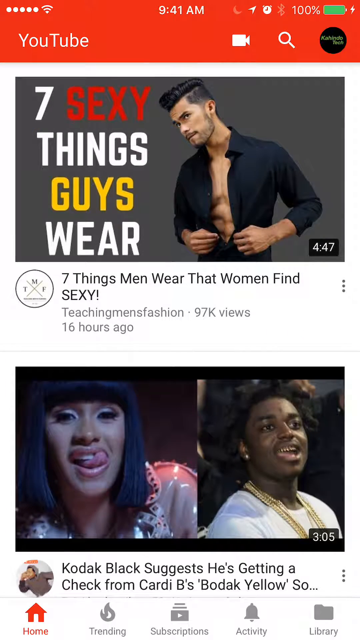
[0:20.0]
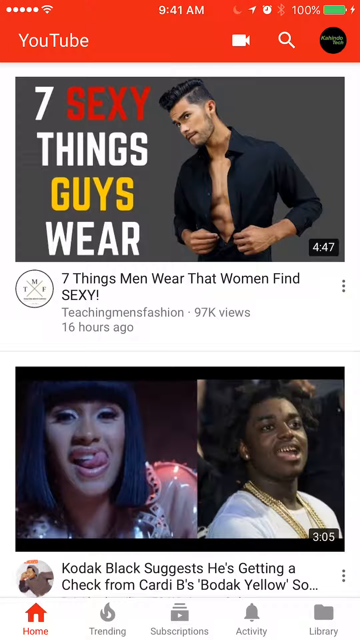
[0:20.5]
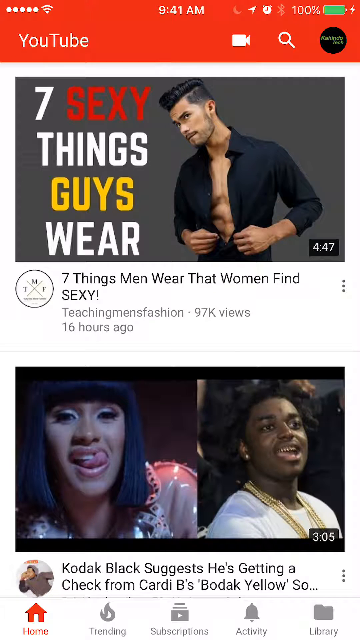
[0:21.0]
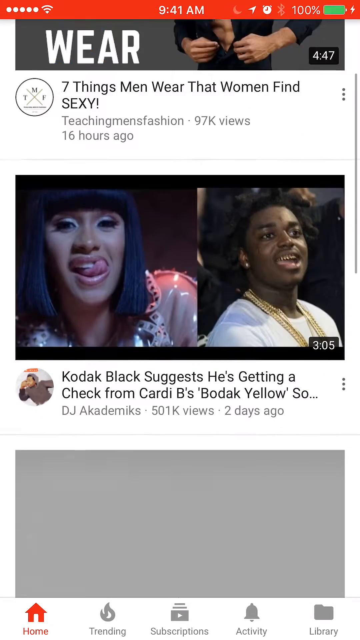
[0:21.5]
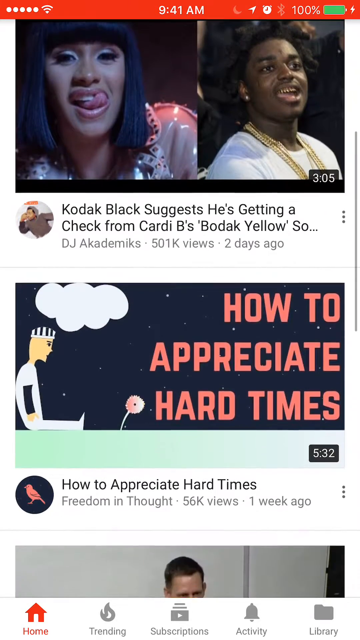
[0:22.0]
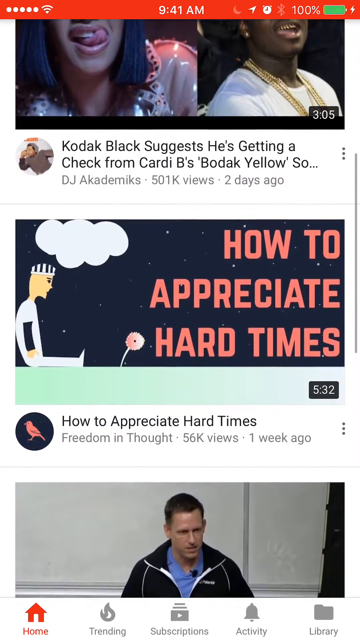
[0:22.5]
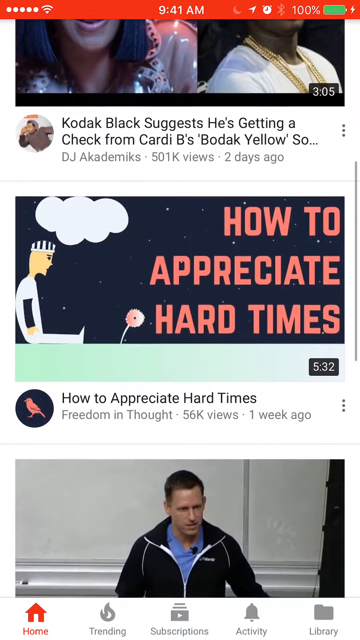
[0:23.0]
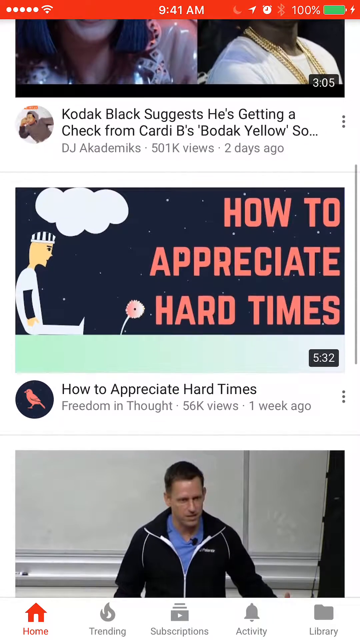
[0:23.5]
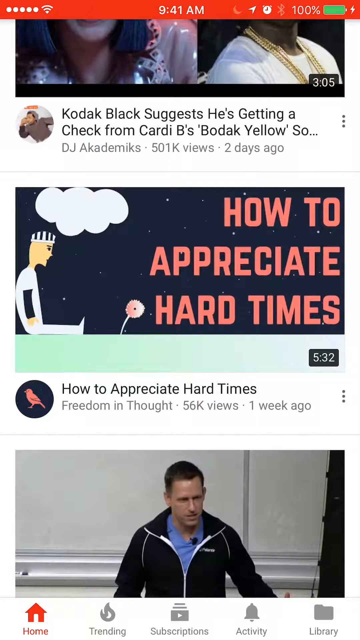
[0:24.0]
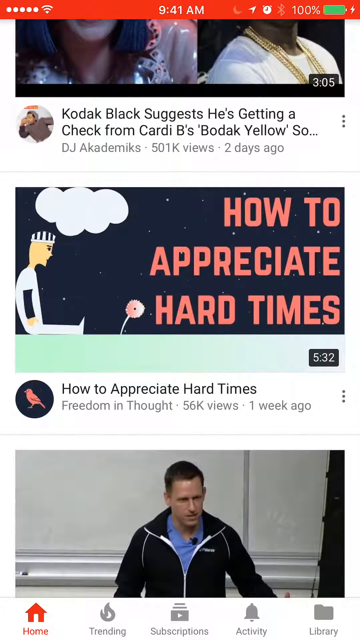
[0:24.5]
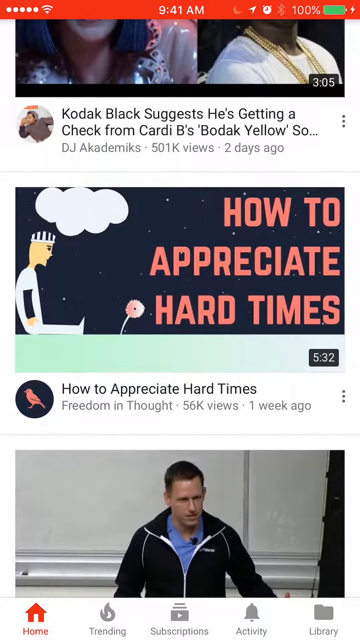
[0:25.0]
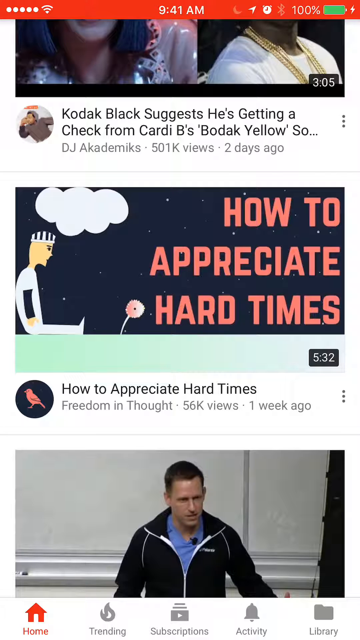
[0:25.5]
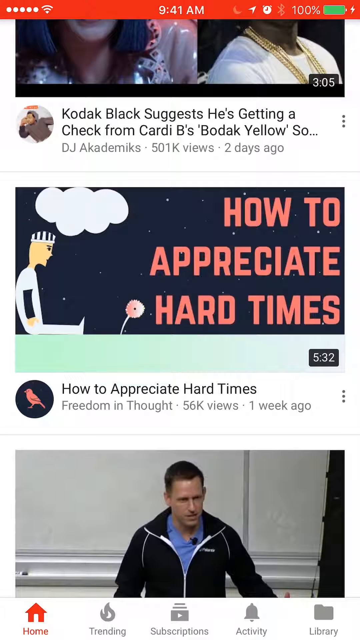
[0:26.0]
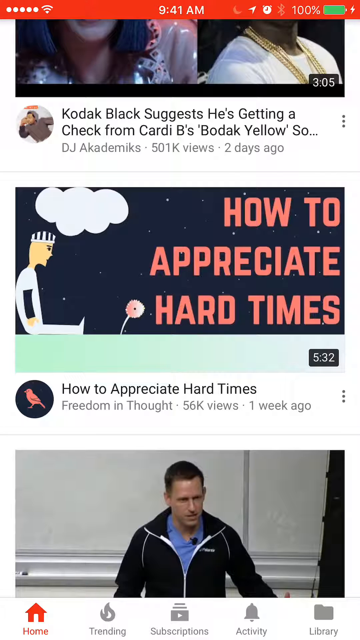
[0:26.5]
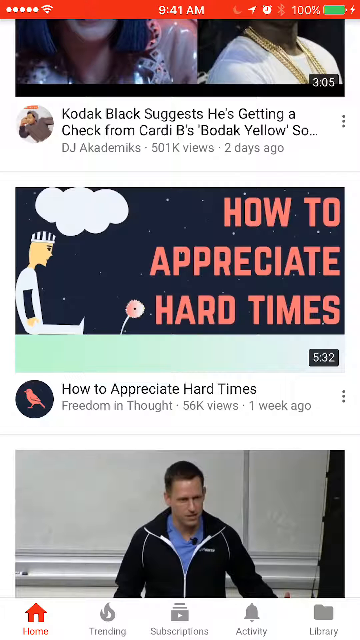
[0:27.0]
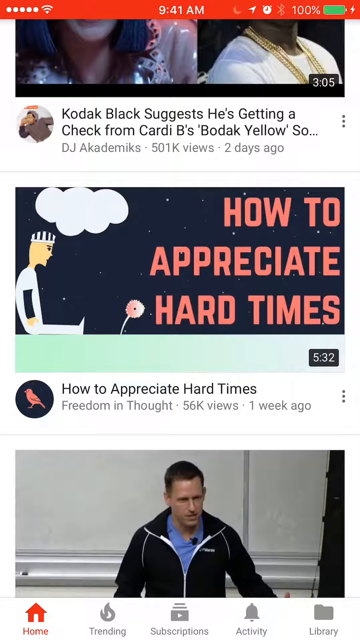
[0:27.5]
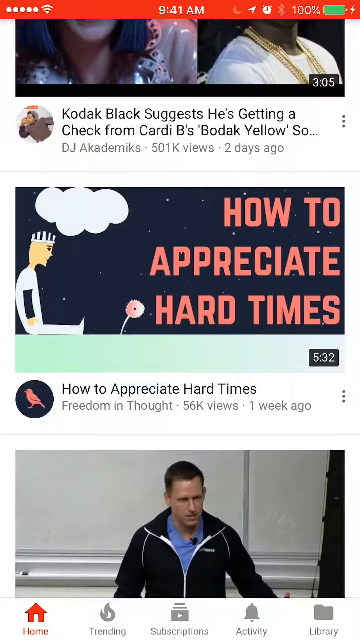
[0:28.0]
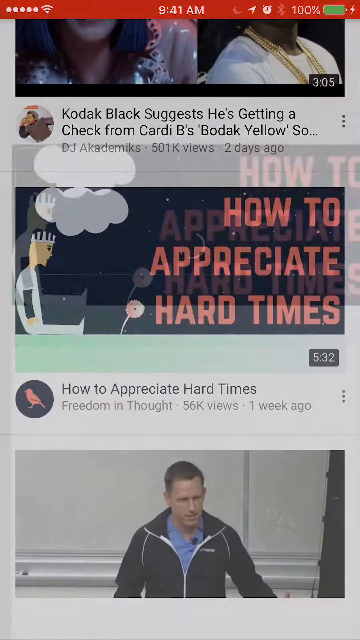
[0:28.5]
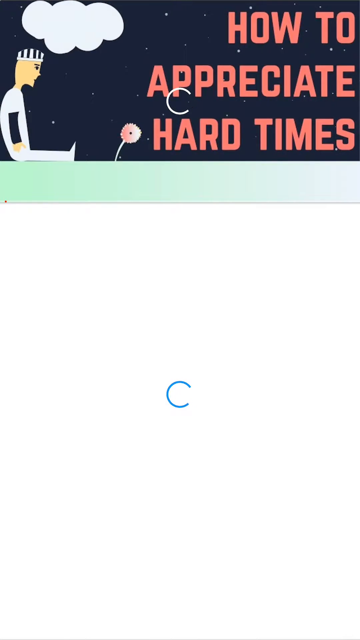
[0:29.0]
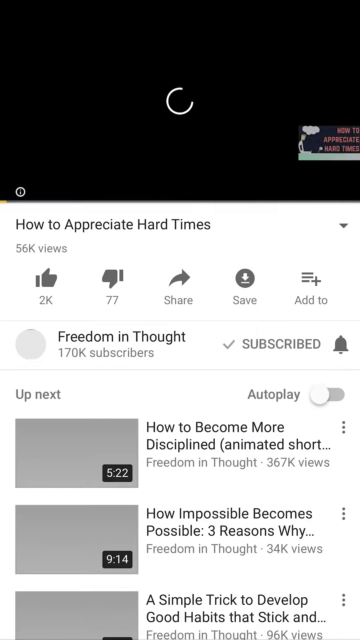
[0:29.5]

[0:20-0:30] The YouTube app is open. At the top is a red bar reading "YouTube", with a camera icon, a search icon and a circular user profile icon. The page shows a few videos: the first is titled "seven things men wear that women find sexy" and has a thumbnail of a man unbuttoning a black button-down shirt; underneath is a video with pictures of rappers Cardi B and Kodak Black, titled "Kodak black suggests he's getting a check from Cardi B's bodak yellow". The user scrolls down to another video titled "how to appreciate hard times", and as the user continues scrolling, a video thumbnail shows a man giving a lecture in a classroom. At the bottom of the page are buttons for home, trending, subscriptions, activity and library. The user seems to click on the video titled "How to Appreciate Hard Times", and that video's page opens and the video begins to load.